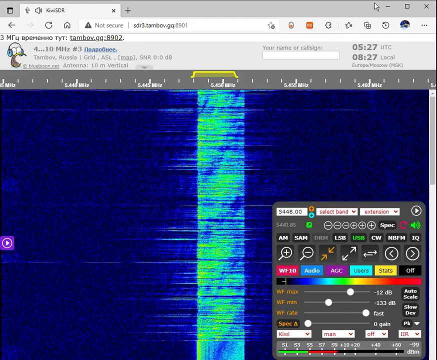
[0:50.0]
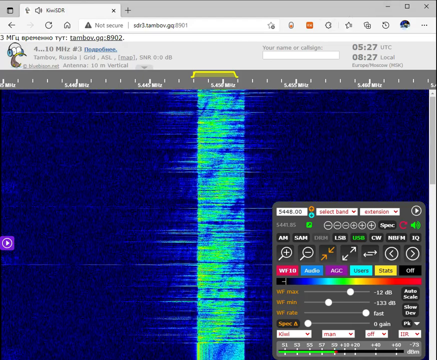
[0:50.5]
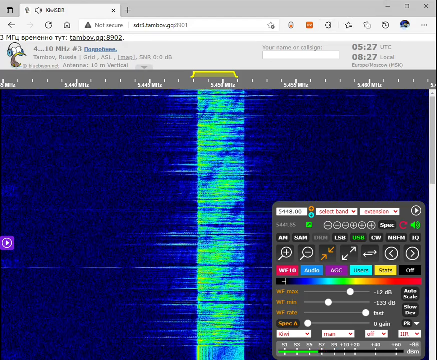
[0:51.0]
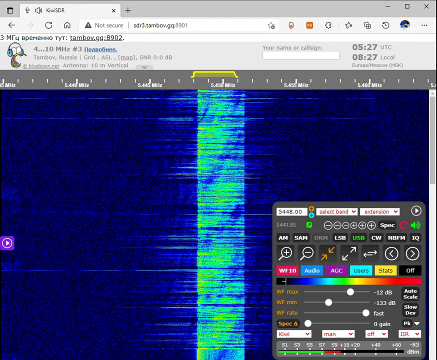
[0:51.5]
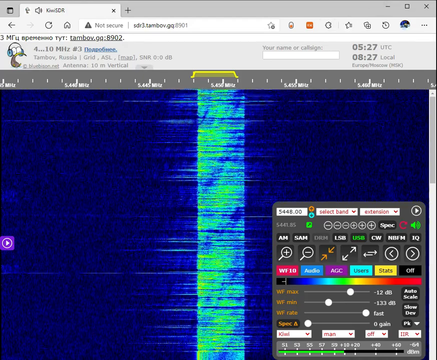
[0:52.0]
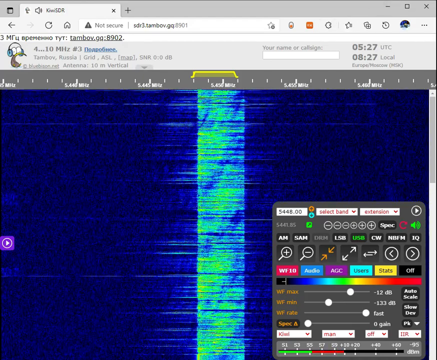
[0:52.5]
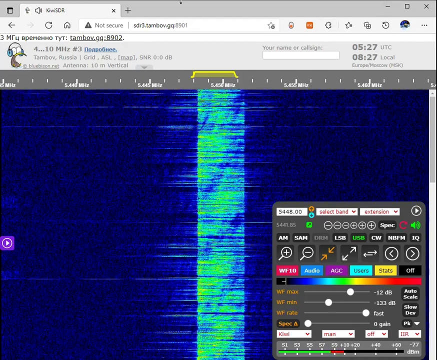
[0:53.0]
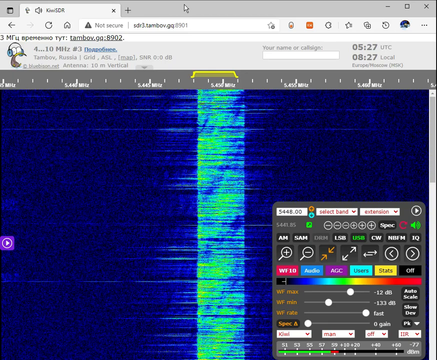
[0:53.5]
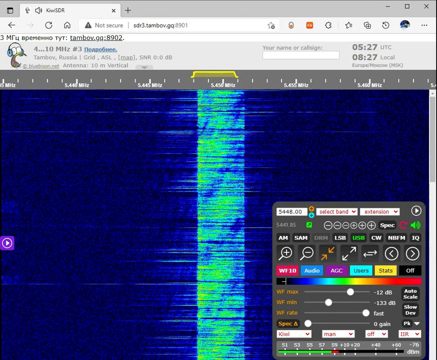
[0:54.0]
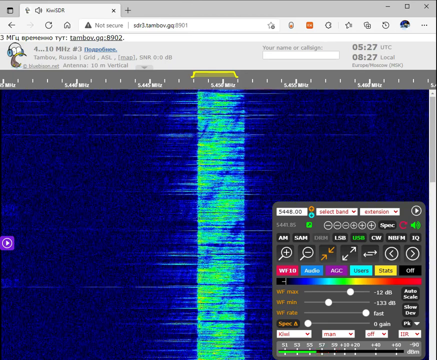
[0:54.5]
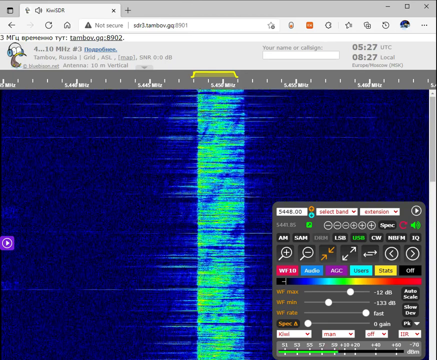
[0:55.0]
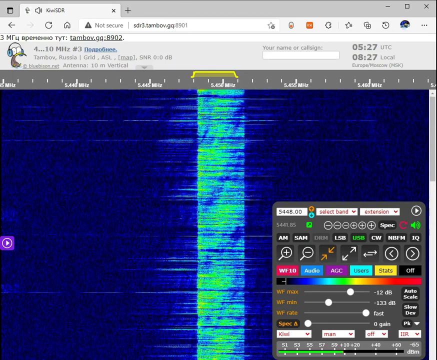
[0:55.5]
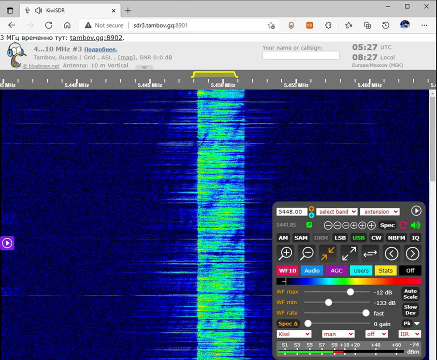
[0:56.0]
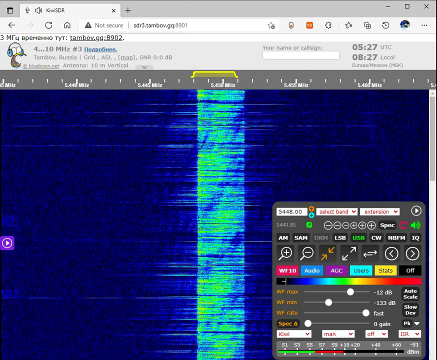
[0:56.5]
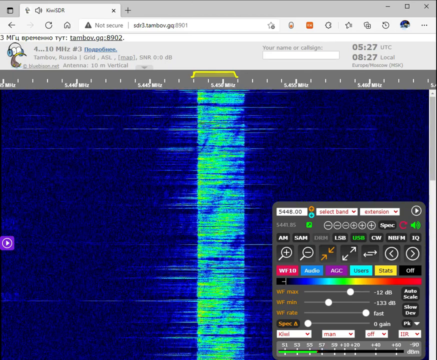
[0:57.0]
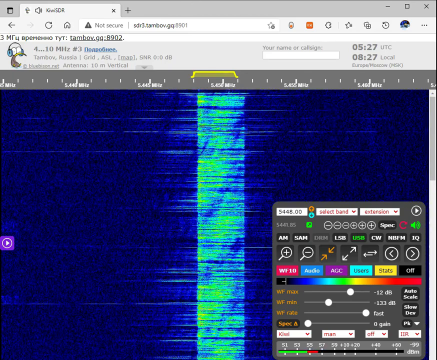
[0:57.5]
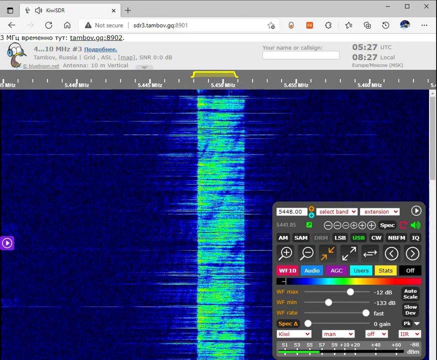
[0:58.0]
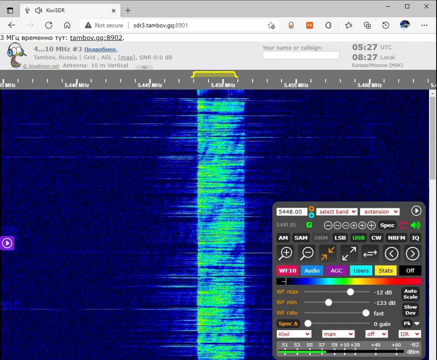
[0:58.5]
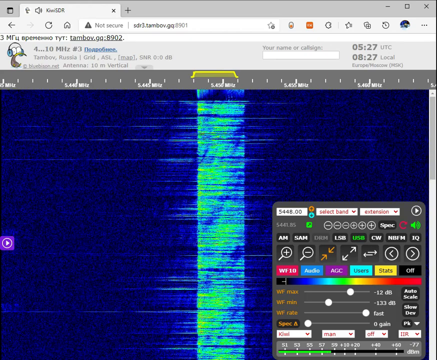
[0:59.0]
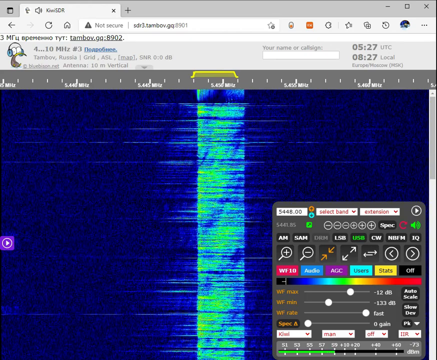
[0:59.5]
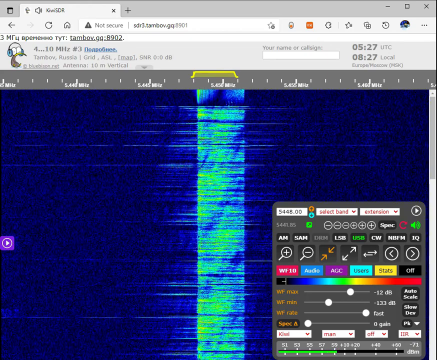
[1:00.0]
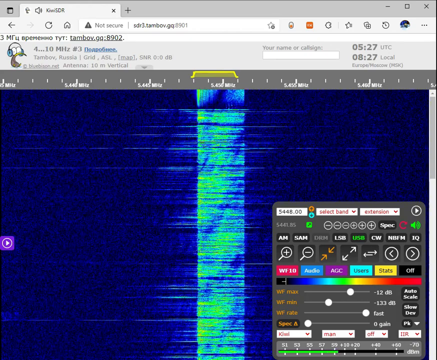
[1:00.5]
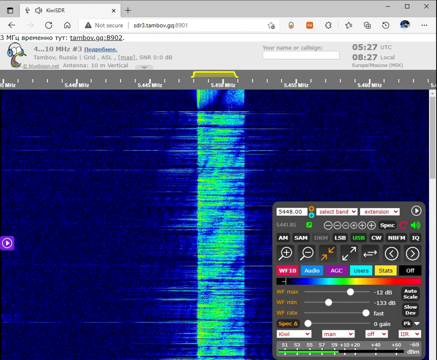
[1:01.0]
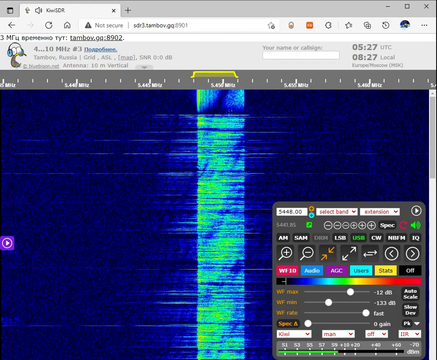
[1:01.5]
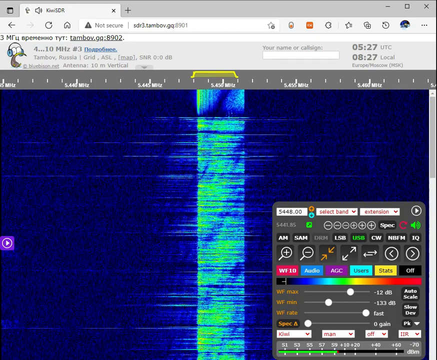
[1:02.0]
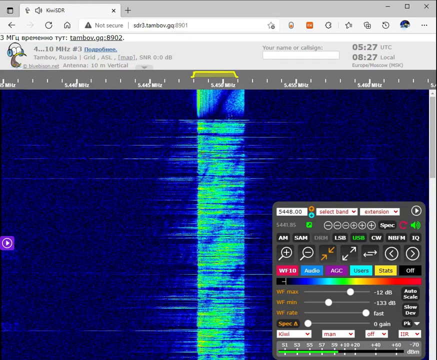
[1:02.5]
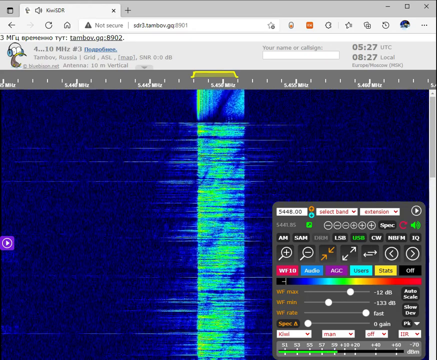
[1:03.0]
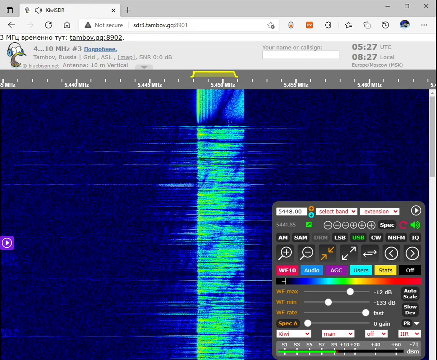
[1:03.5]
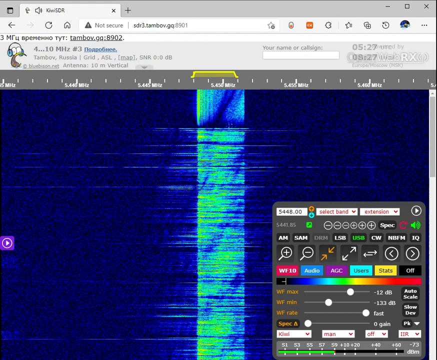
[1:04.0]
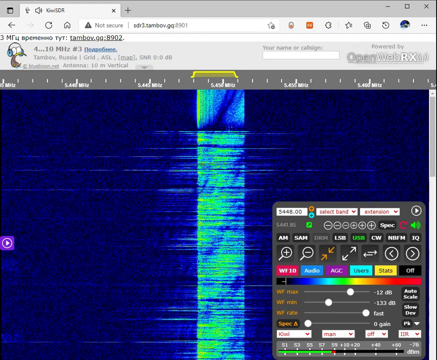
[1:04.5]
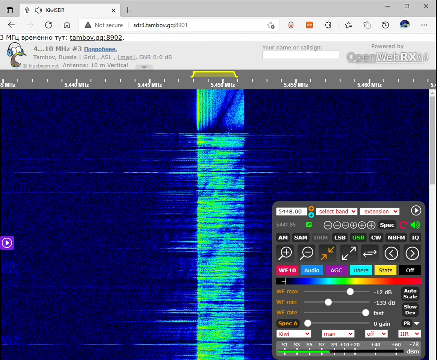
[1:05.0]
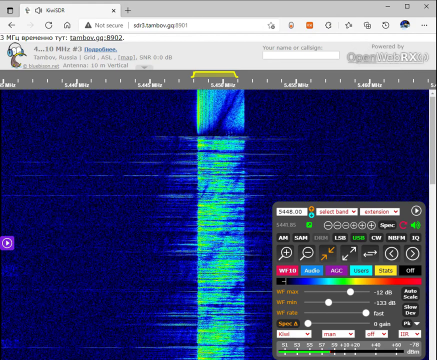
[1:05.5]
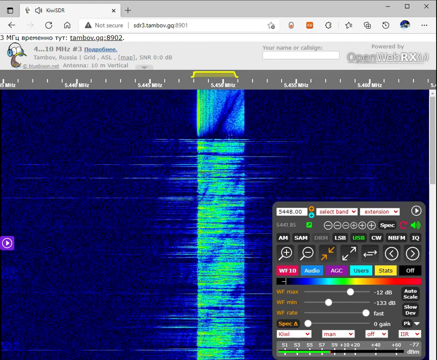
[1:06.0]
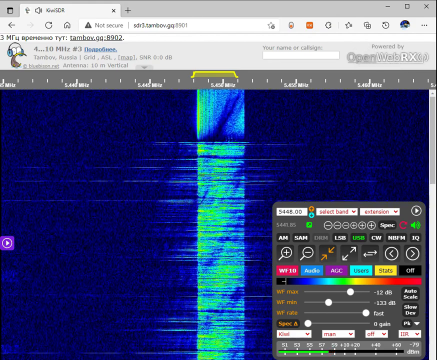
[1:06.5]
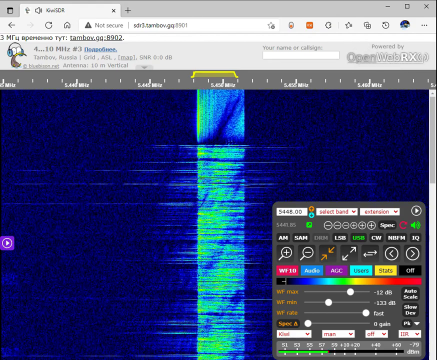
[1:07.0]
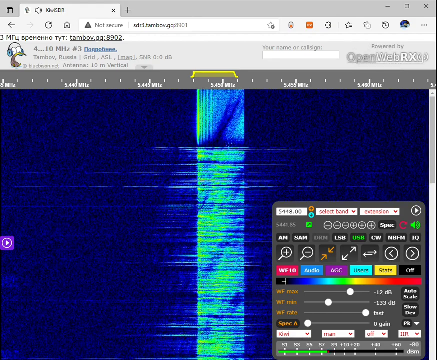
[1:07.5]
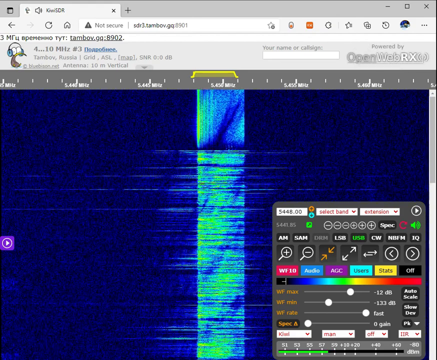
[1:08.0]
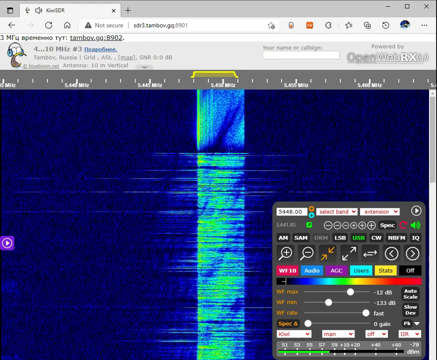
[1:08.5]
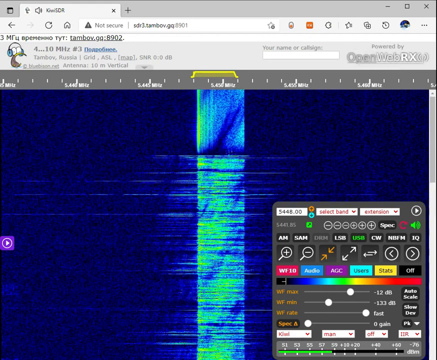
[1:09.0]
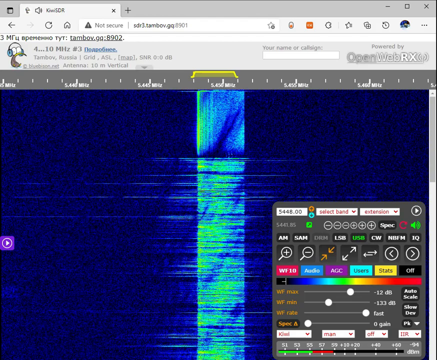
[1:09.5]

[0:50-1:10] The audio continues to be shown in visual form on the blue screen, with the band of yellow and light green moving downward and new information coming in from the top. At one spot the band consists of very thin, continuous horizontal lines packed close together, and then it reaches a point where the lines are more spaced out, so that a swoop of blue background runs from the bottom left to the upper right. The older information also contains swoops, but they are less defined and much more covered by green and yellow, whereas here a clearly defined swoop lets the background color show through.